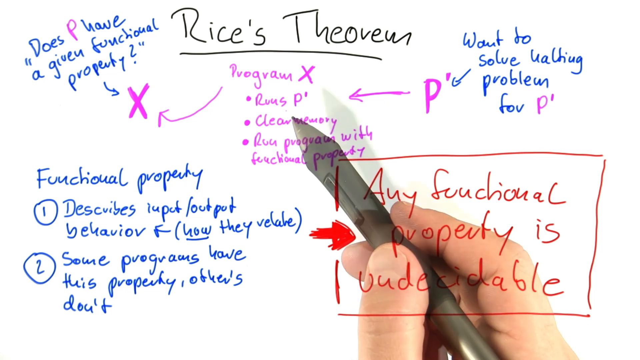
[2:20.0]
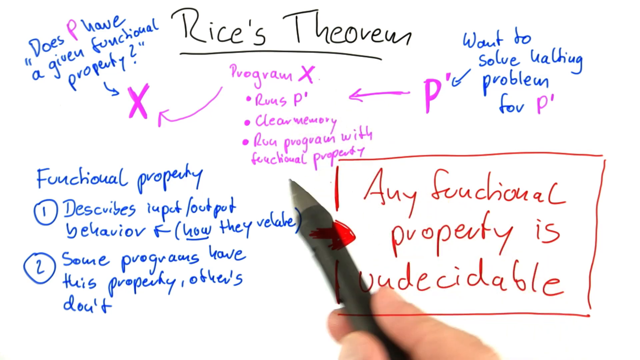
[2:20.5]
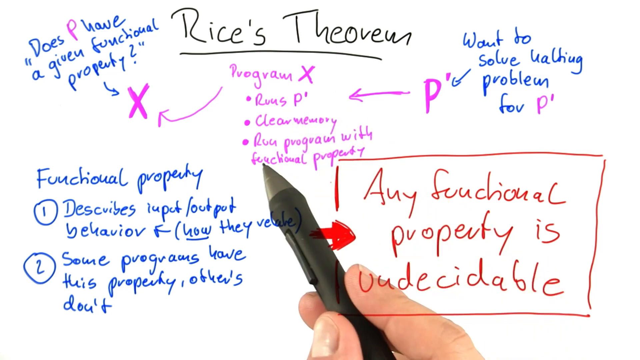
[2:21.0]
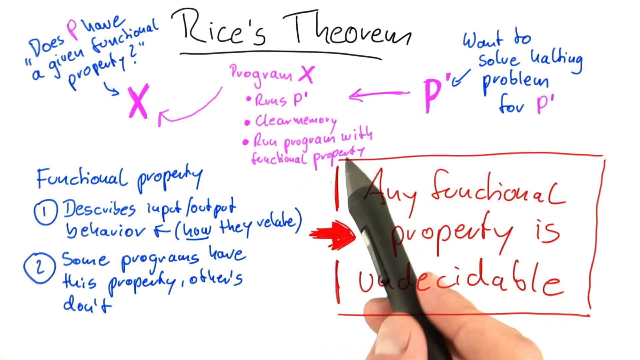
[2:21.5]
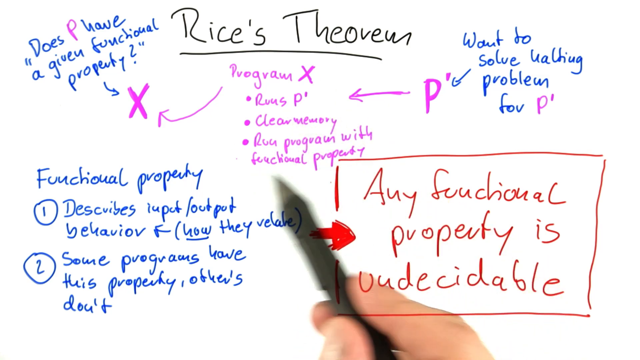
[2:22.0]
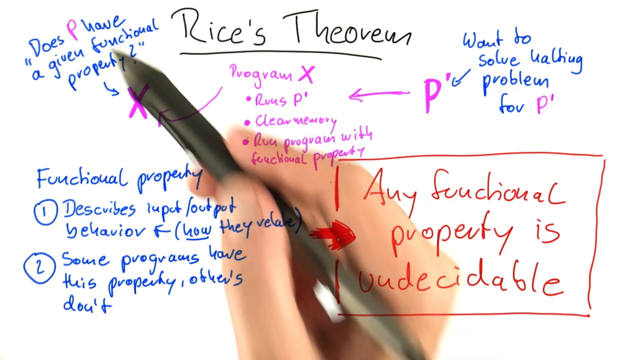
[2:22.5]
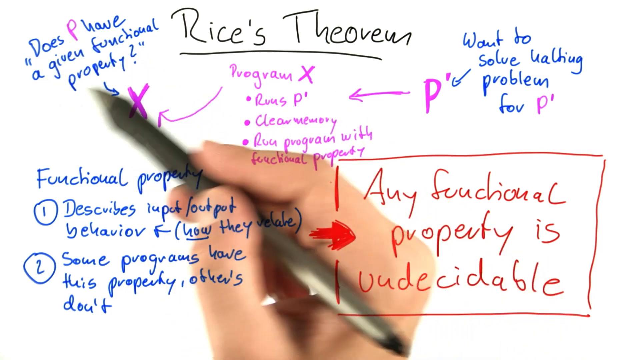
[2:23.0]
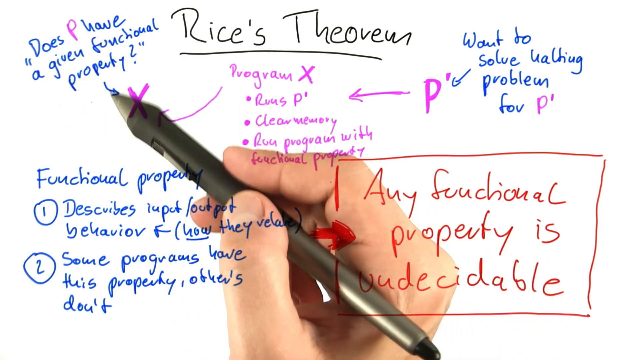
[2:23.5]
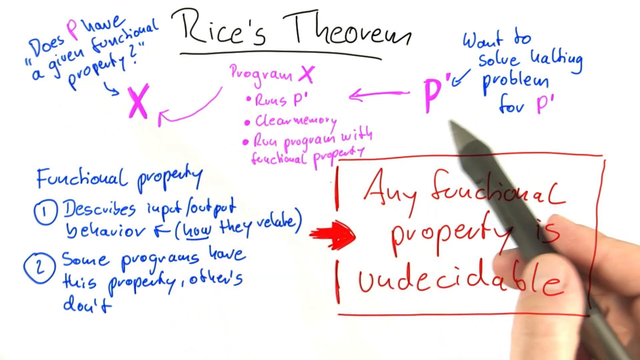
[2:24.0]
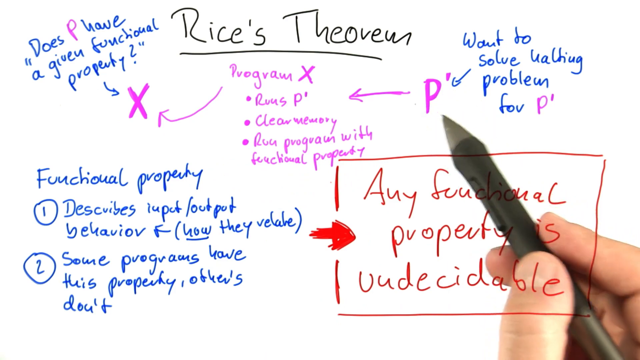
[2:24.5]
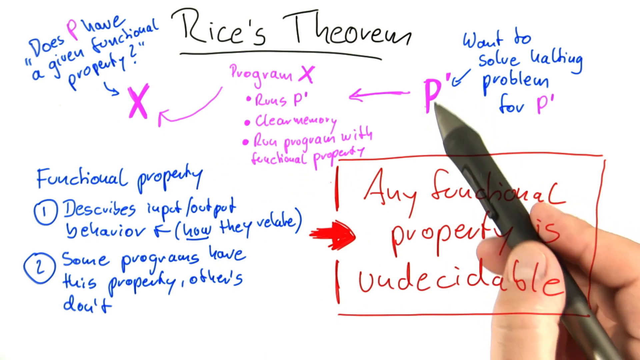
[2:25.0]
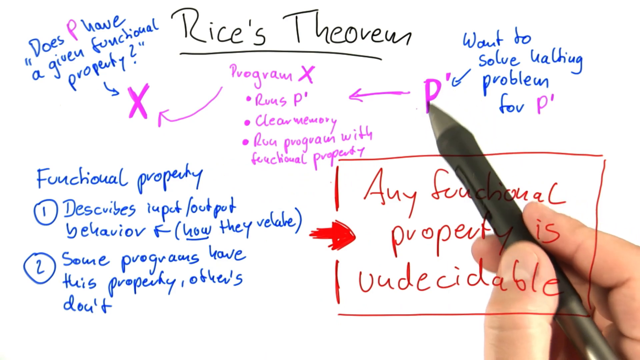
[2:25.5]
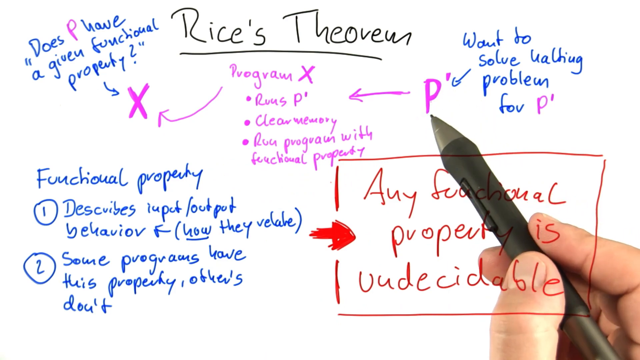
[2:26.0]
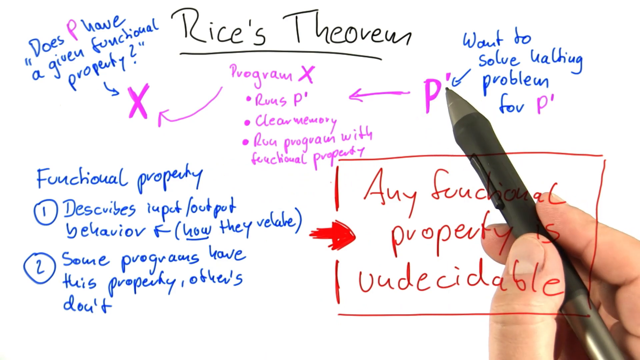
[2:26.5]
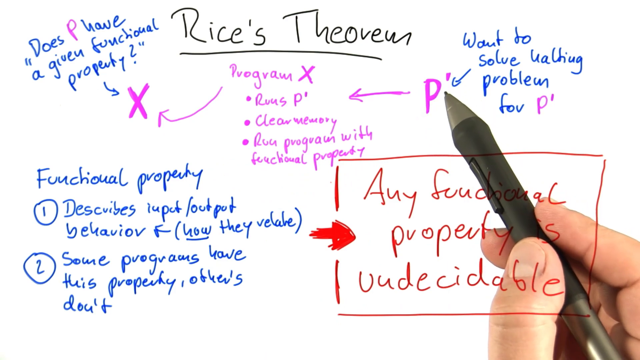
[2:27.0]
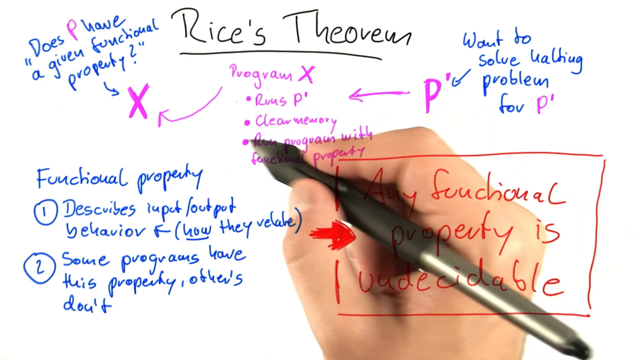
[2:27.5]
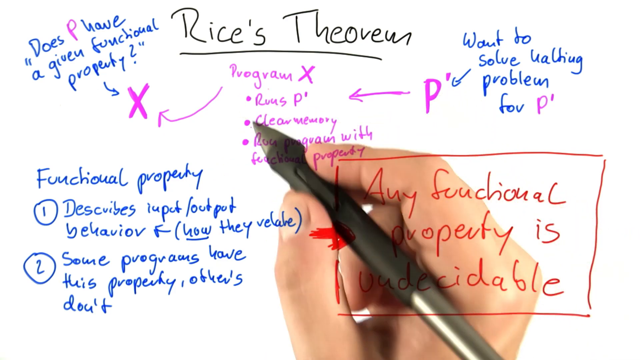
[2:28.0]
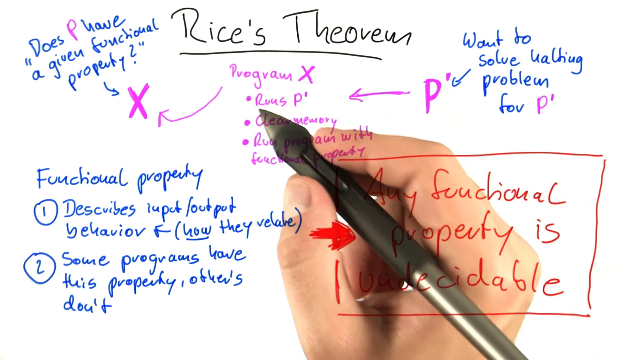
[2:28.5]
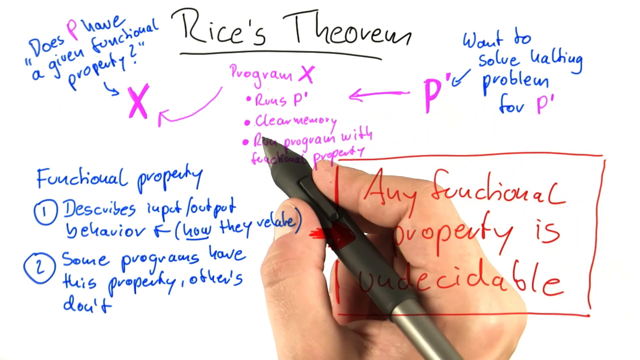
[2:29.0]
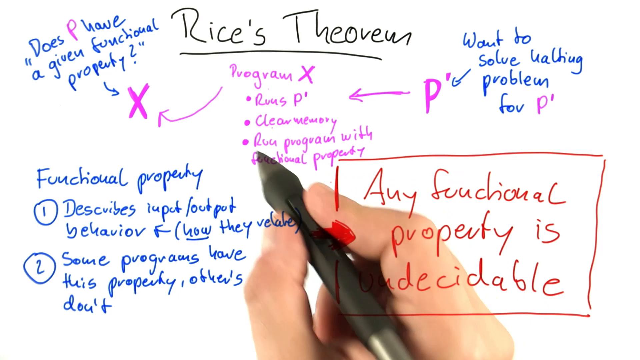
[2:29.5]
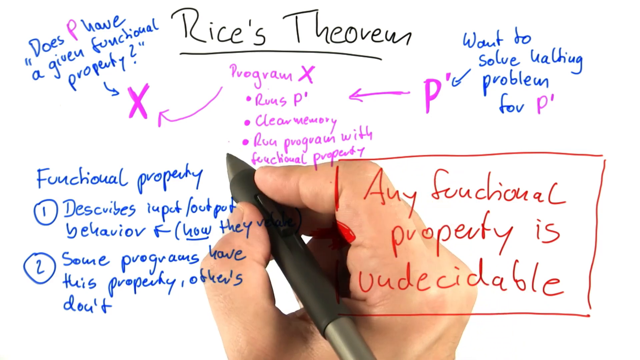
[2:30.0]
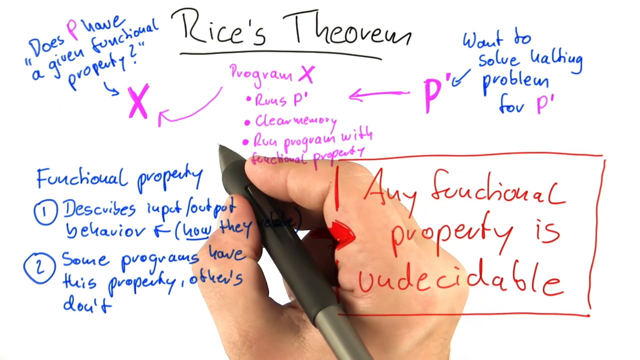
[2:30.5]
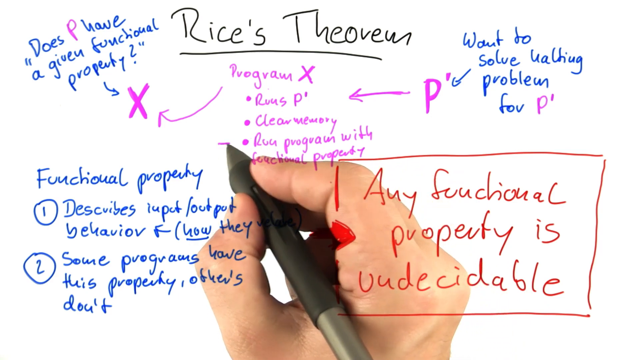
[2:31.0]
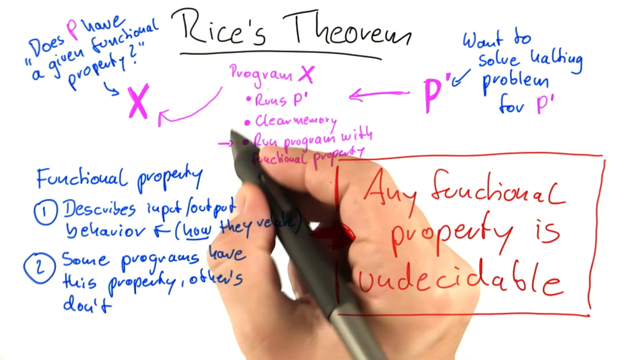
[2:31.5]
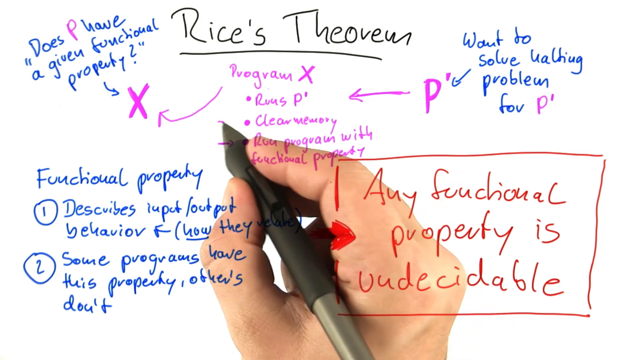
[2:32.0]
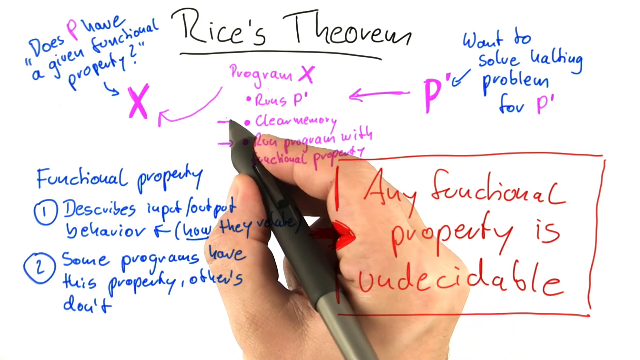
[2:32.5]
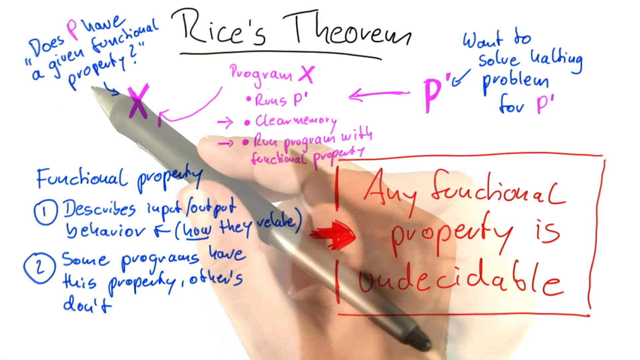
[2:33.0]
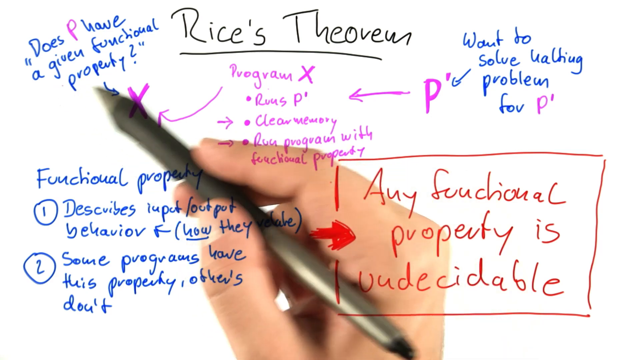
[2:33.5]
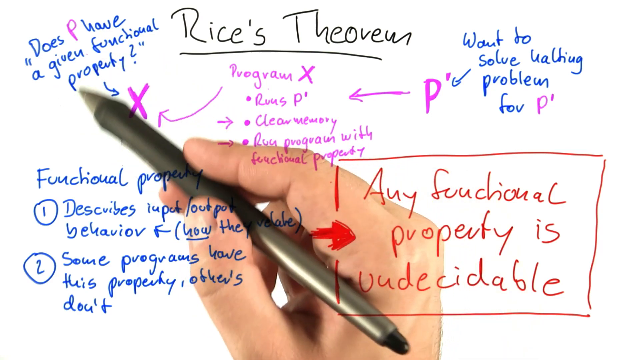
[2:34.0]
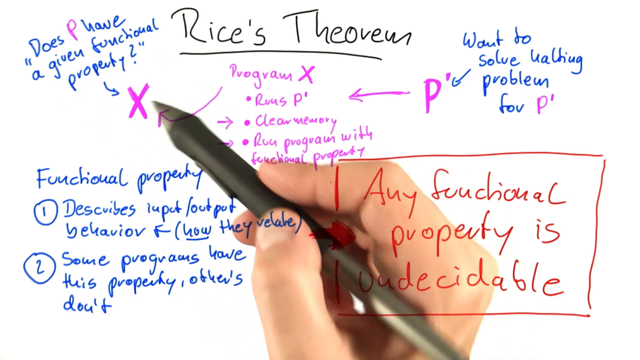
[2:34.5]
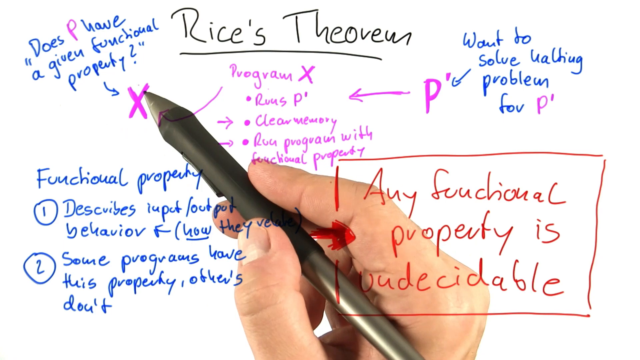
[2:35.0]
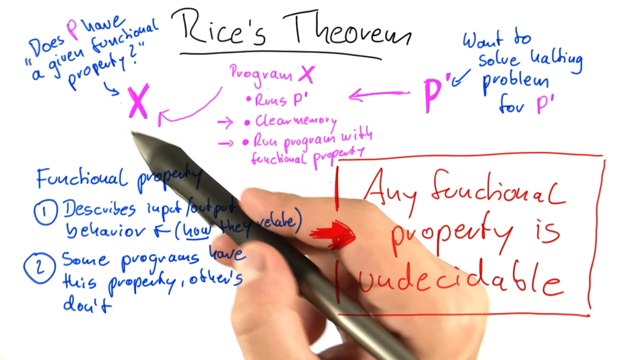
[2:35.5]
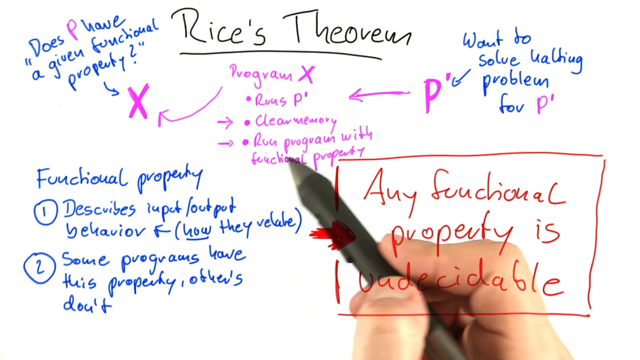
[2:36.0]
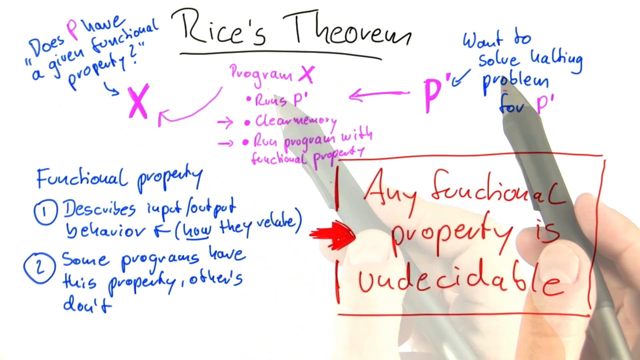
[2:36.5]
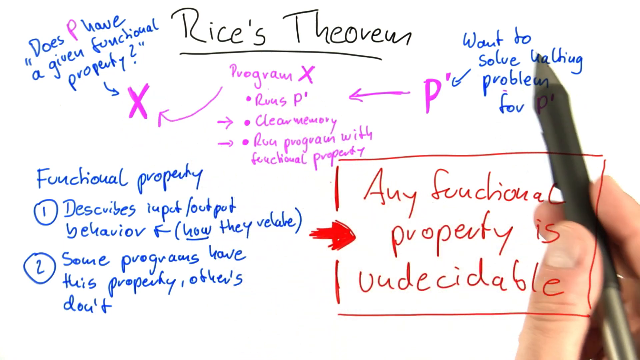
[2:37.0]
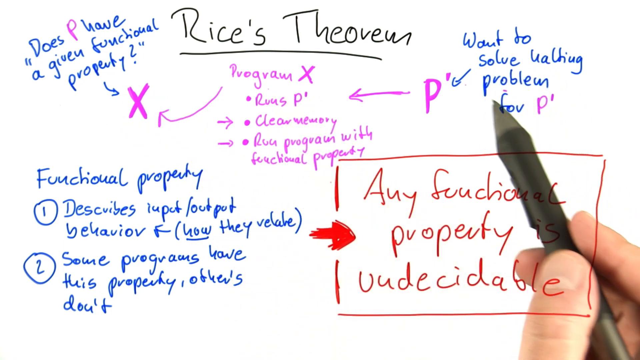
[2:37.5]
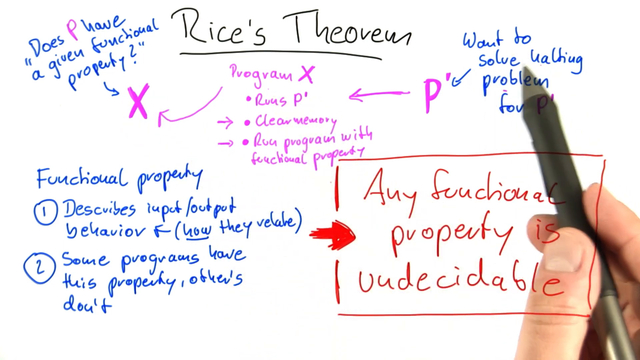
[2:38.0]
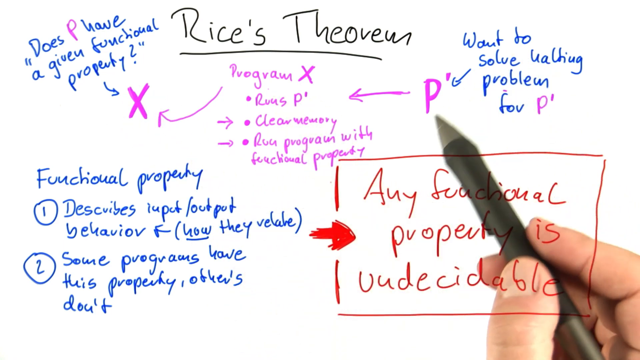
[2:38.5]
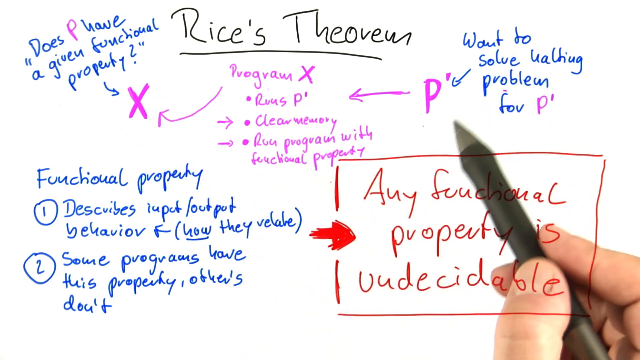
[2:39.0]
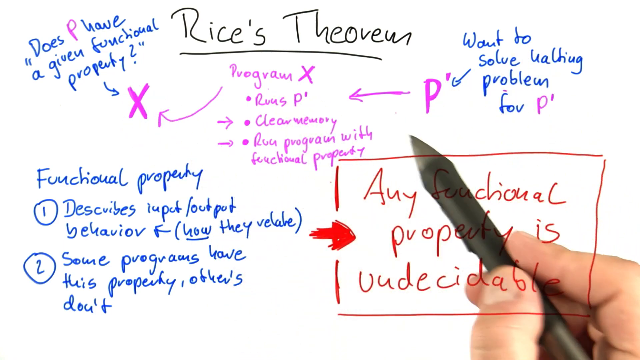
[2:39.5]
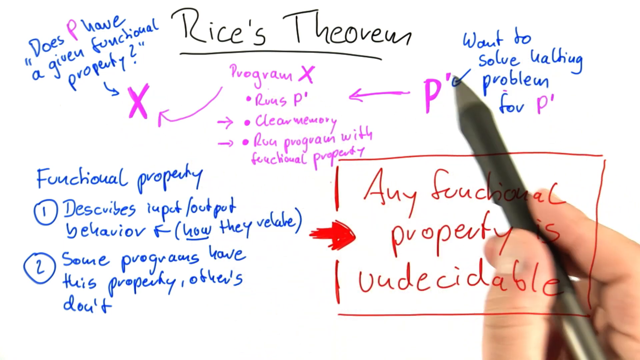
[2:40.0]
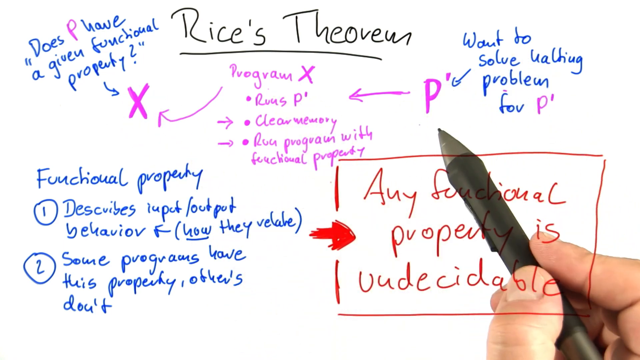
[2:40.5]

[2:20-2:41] Black text on a white background says "Rice's Theorem." In the upper left corner, blue and purple text in quotation marks says "does P have a given functional property," with a blue arrow pointing to a purple X and a purple arrow also pointing to the purple X. That purple arrow is connected to purple text in the center that says "program X," "Russ's P," "clear memory," and "root program with functional property." A purple P has a purple arrow pointing to that text, and blue text says "want to solve waiting problem for P" with a blue arrow pointing to the P. Blue text in the bottom left corner says "functional property 1 describes input output behavior, how they relate, and 2 some programs have this property and others don't." A red box has a red arrow pointing to red text that says "any functional property is undecidable." A person's hand with a pen points to some of the purple text, the blue text in the upper left corner, and the purple P on the right side, then begins drawing arrows from where program X is to clear memory and the root program with functional property.